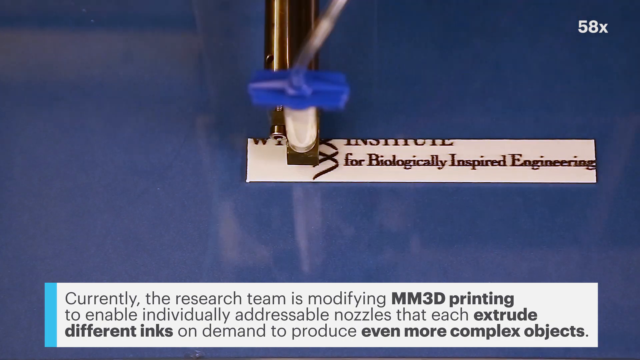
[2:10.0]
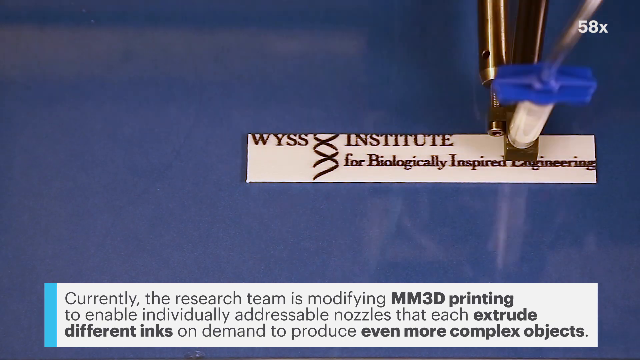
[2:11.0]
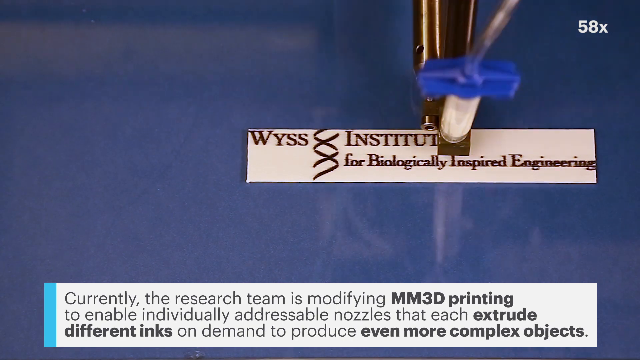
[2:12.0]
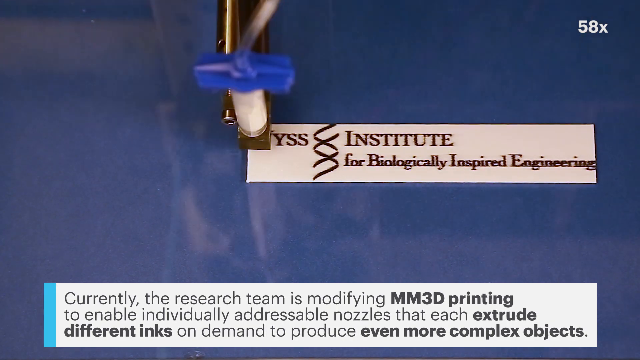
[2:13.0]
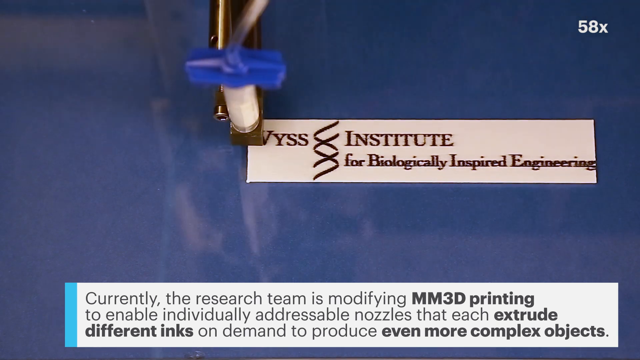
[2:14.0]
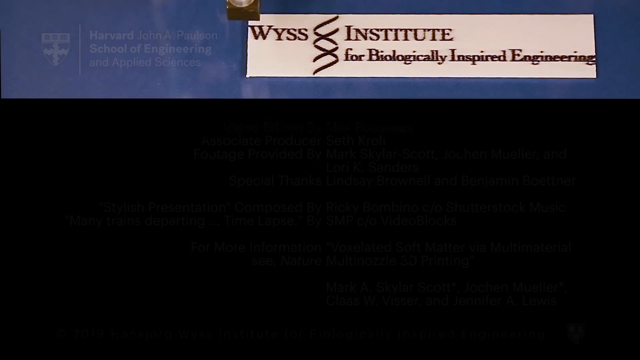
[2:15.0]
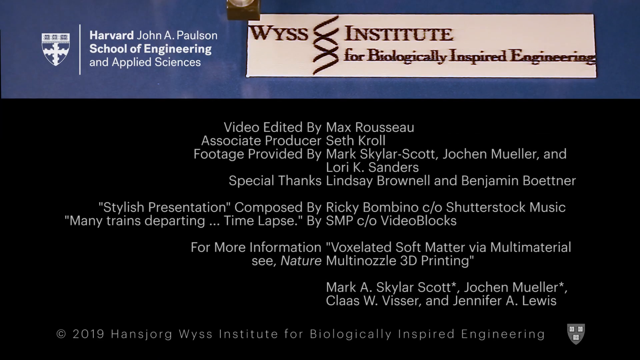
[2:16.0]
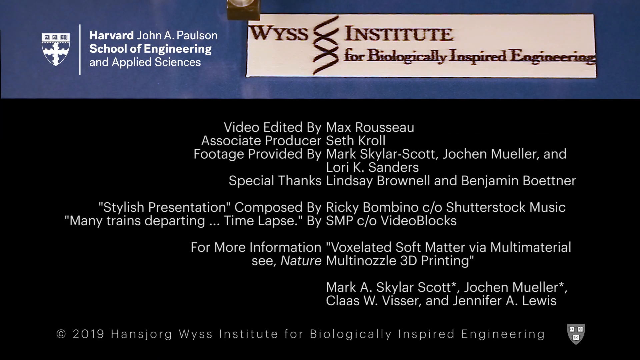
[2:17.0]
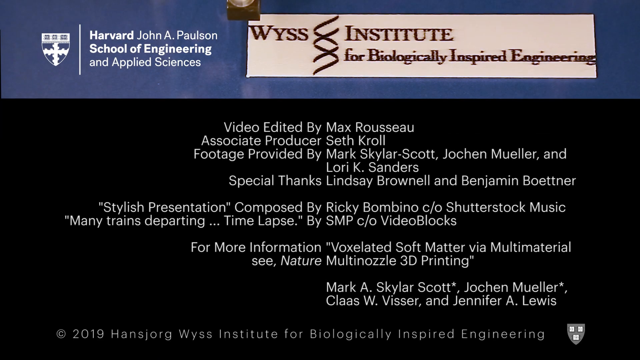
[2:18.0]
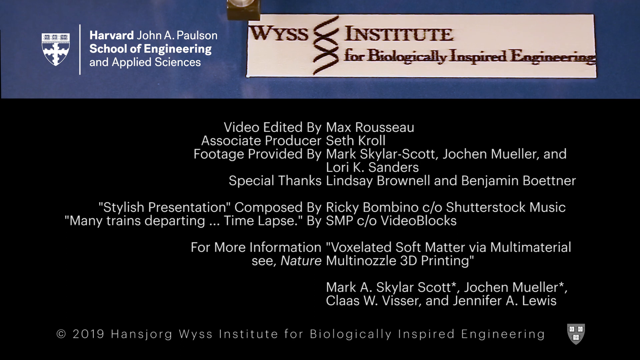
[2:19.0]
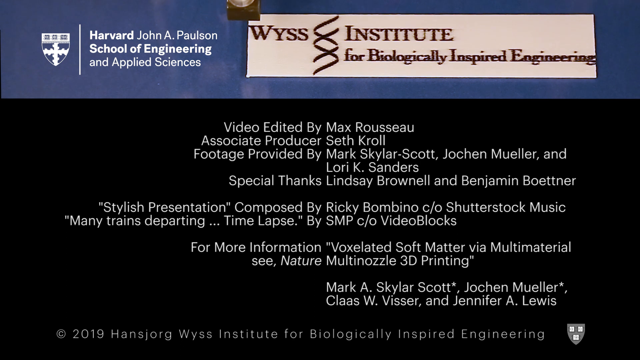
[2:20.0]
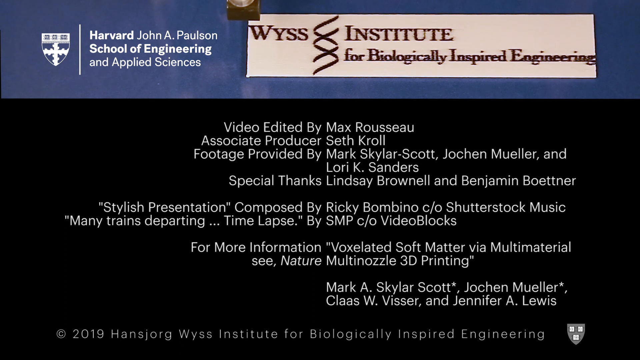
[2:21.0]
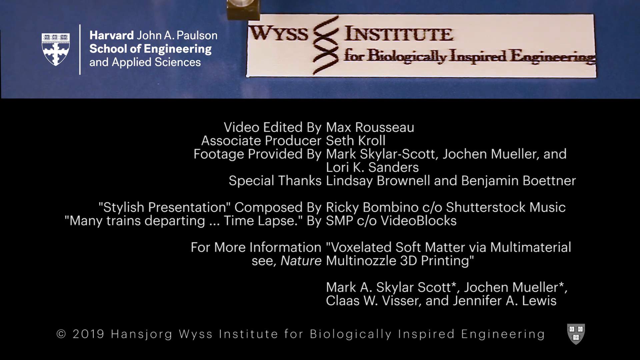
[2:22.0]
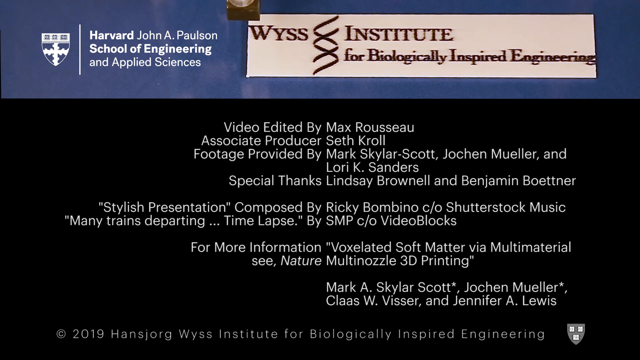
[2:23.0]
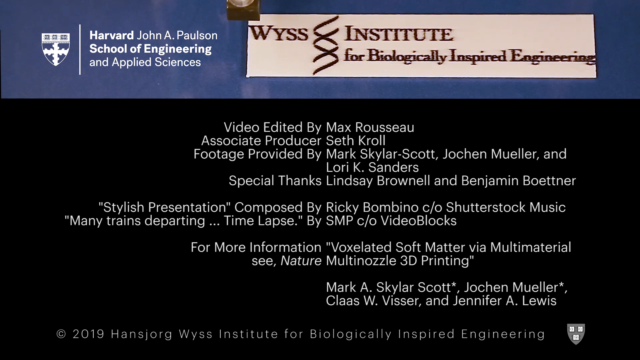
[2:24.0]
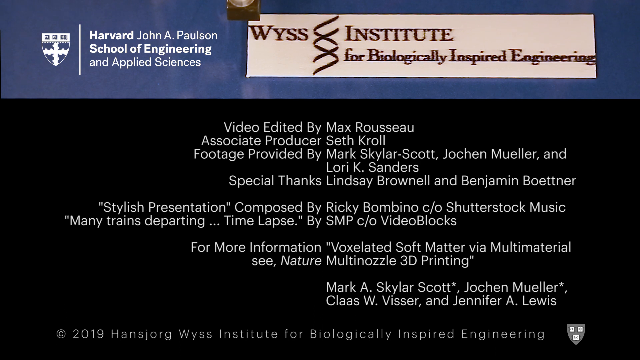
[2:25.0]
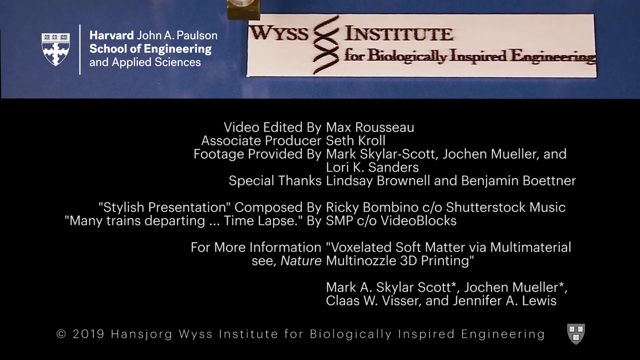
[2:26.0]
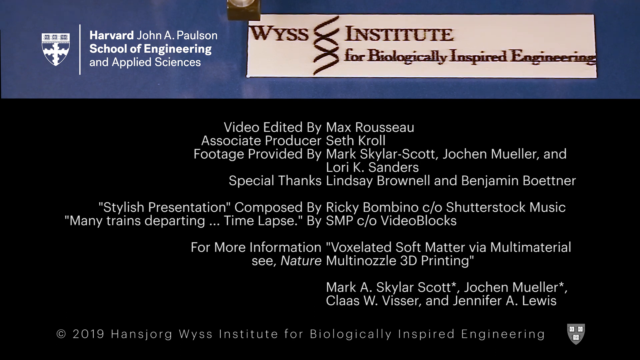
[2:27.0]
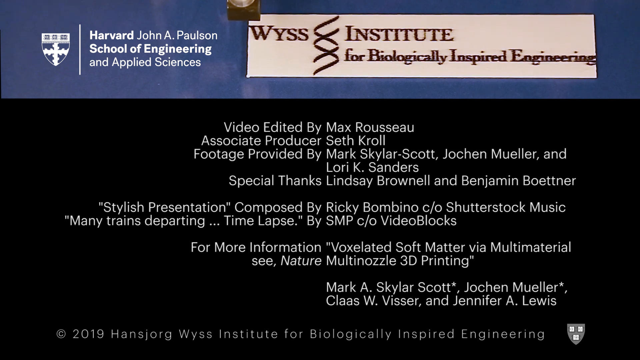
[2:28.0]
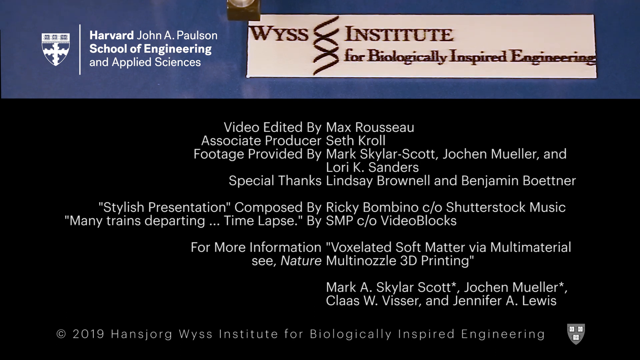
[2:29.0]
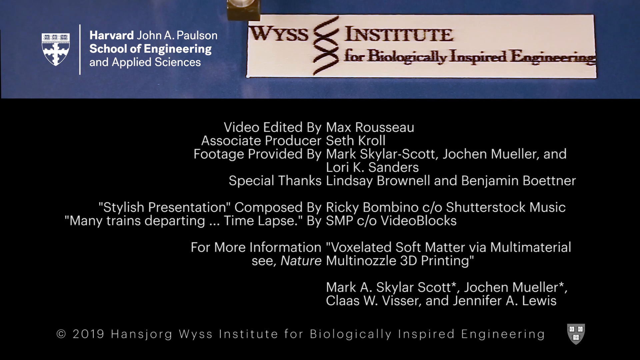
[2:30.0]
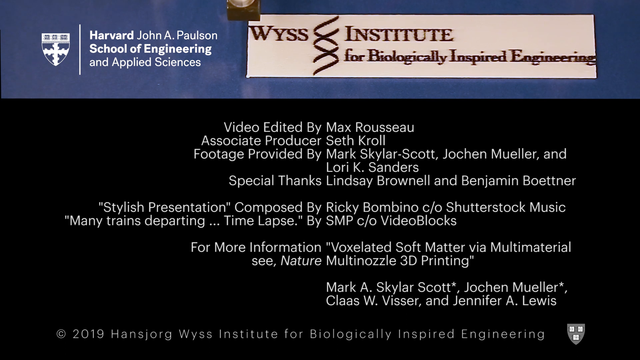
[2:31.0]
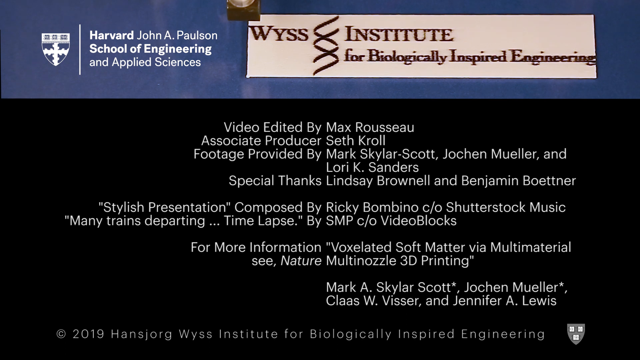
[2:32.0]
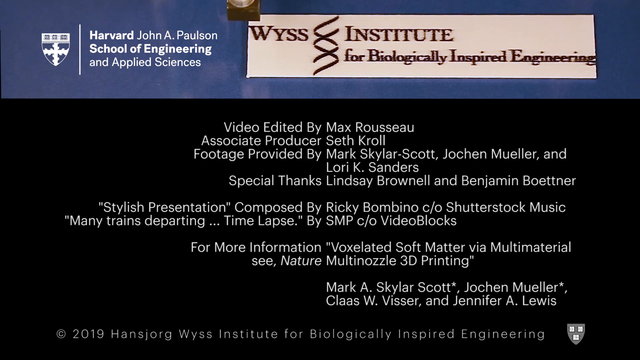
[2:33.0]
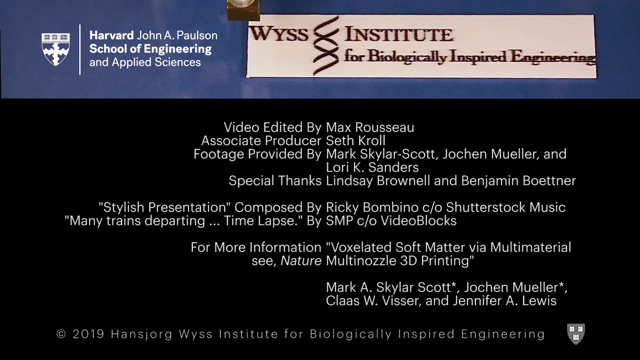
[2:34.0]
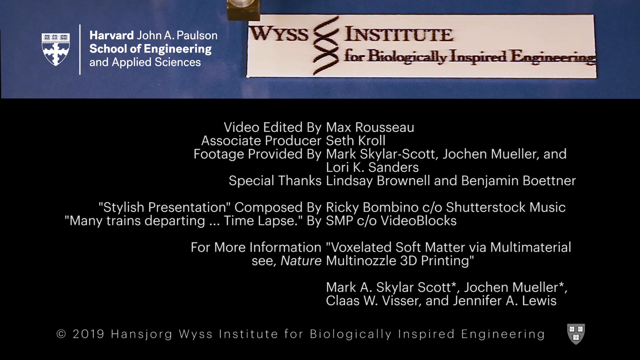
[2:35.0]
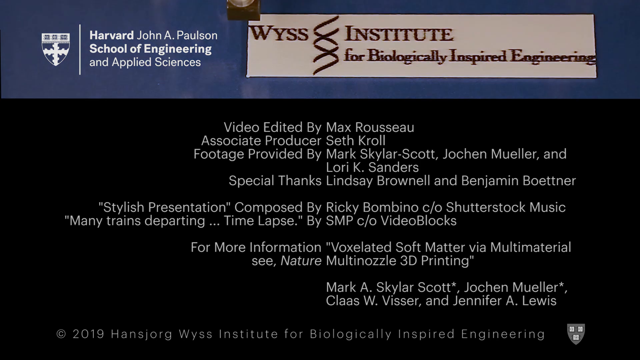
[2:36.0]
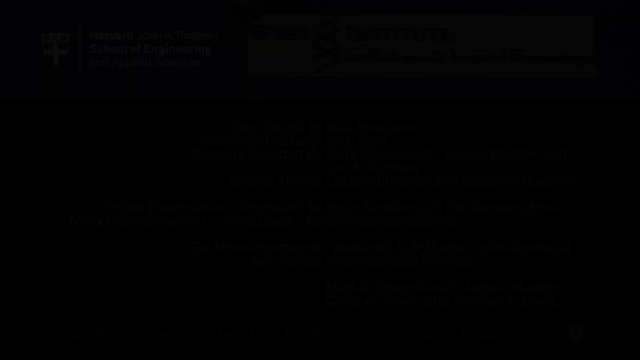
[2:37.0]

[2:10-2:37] The printer has created a black and white nameplate reading "Wyss Institute for Biologically Inspired Engineering". A logo for the Harvard John A. Paulson School of Engineering and Applied Sciences follows. Credits state that the video was produced in 2019 and edited by Max Russo, point to an article in Nature on multi-nozzle 3D printing, credit the music to Ricky Bombino courtesy of Shutterstock Music, give special thanks to Lindsey Brinal and Benjamin Boettner, and name Seth Kroll as associate producer.